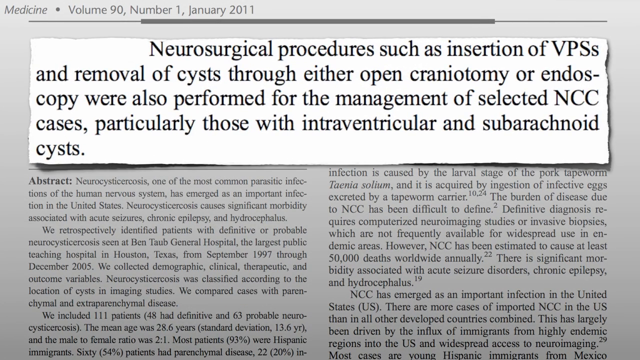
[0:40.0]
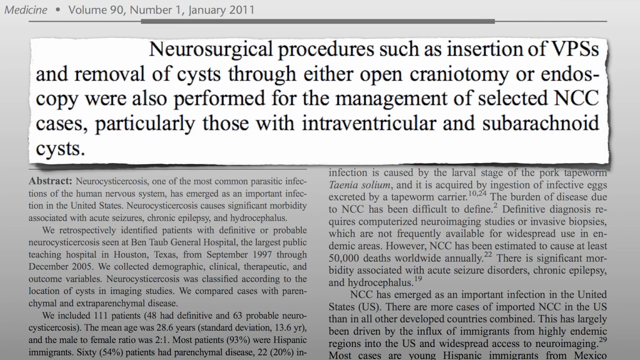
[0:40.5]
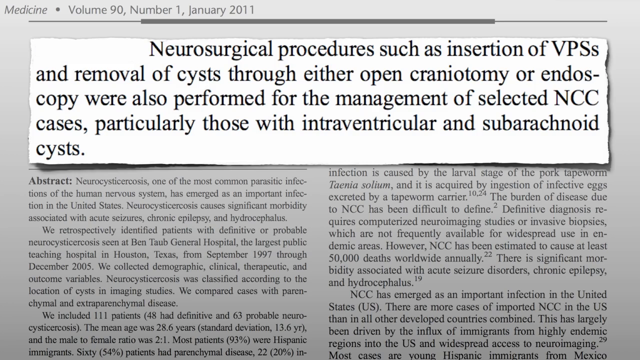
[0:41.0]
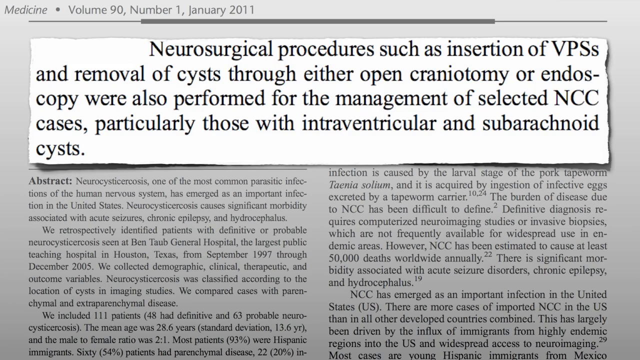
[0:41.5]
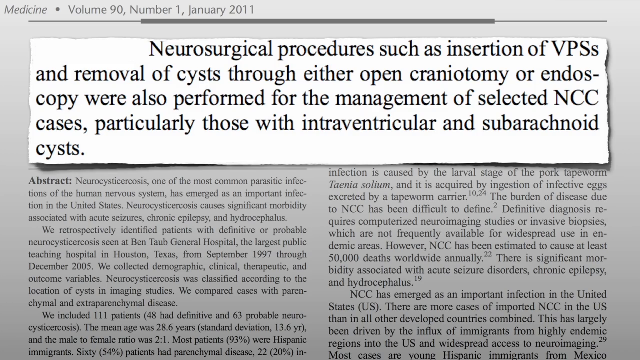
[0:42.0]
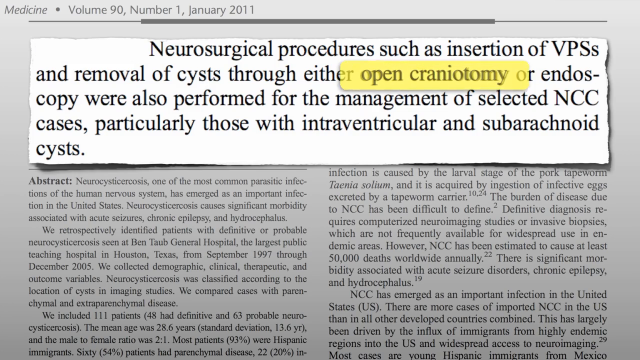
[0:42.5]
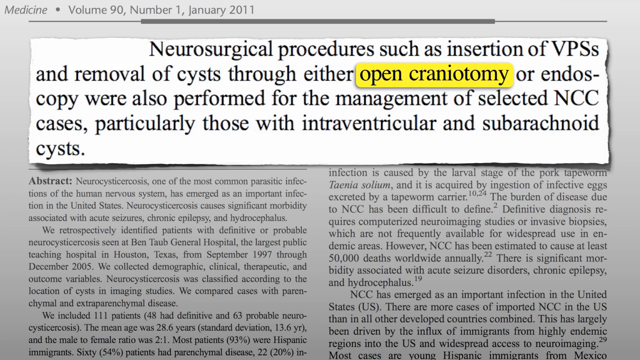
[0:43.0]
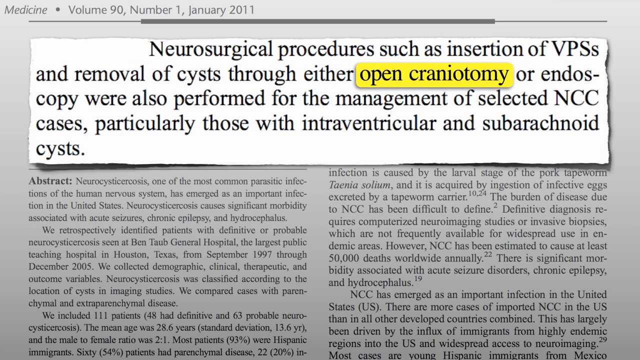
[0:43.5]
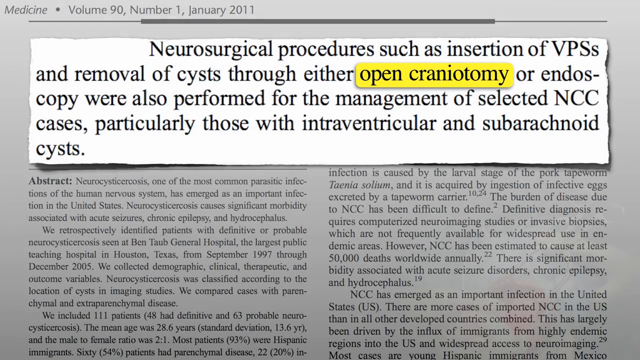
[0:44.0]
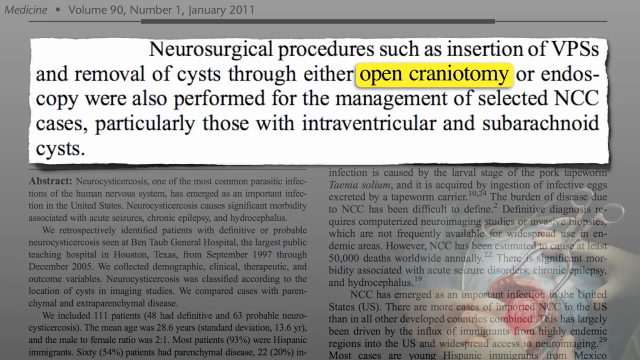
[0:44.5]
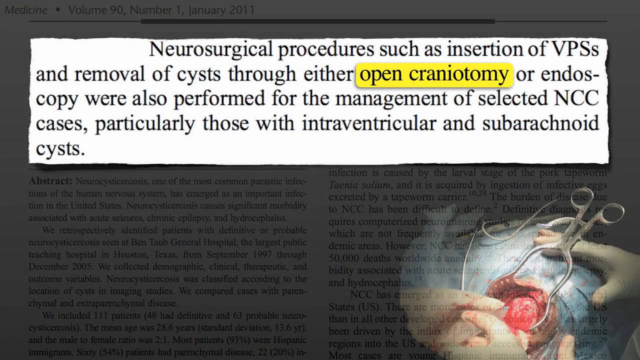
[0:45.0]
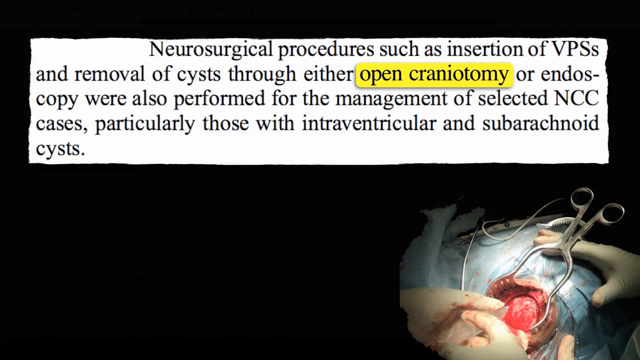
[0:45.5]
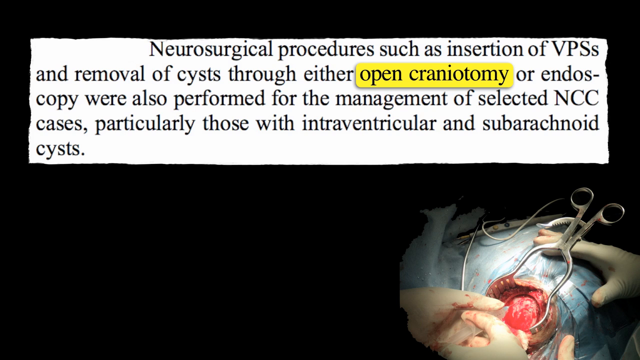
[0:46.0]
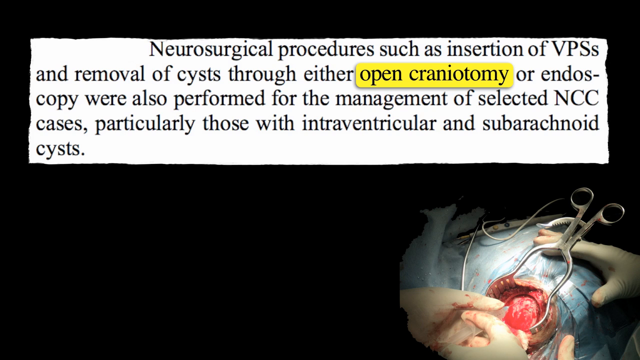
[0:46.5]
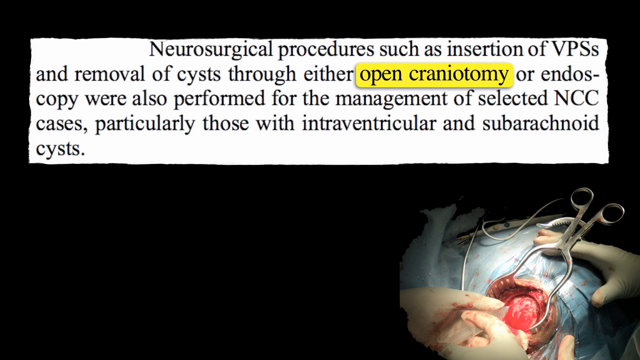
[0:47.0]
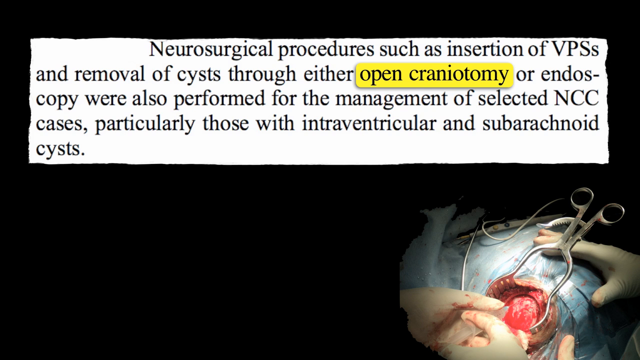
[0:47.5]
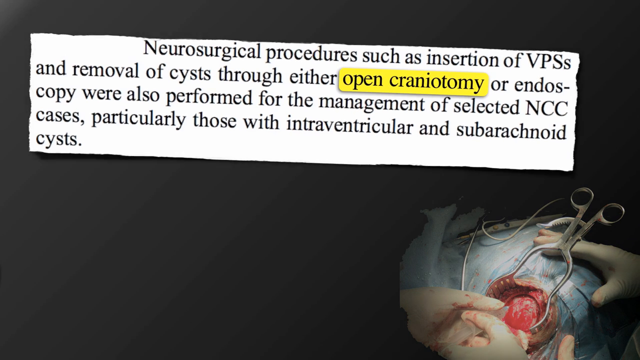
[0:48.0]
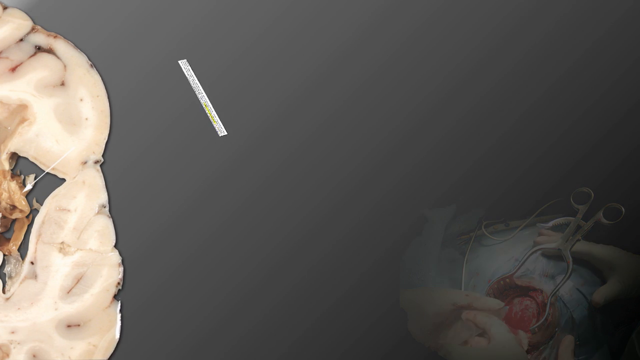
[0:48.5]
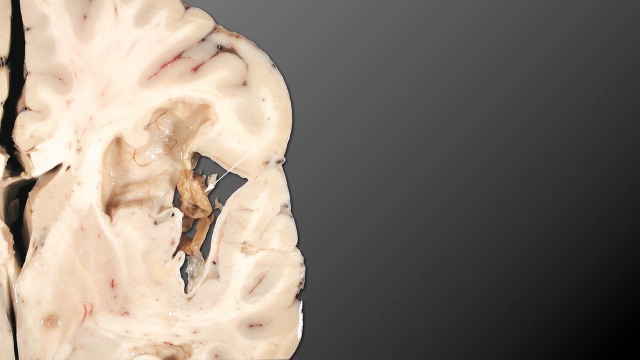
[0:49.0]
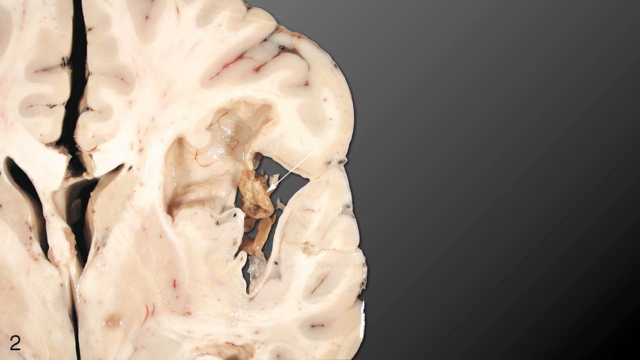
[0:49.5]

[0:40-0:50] One sentence in the Medicine article is highlighted. It refers to treatment through neurosurgical procedures such as insertion of VPSs and removal of cysts through either open craniotomy or endoscopy, performed in Texas. An image of an operation follows: a major hole has been cut in a patient, and forceps hold it open as some sort of cyst is removed. The article states that this is an important infection nowadays in the USA, with more cases imported into the US than into all other developed countries combined, due to a large influx of Hispanic immigrants from Mexico who are particularly prone to the disease.